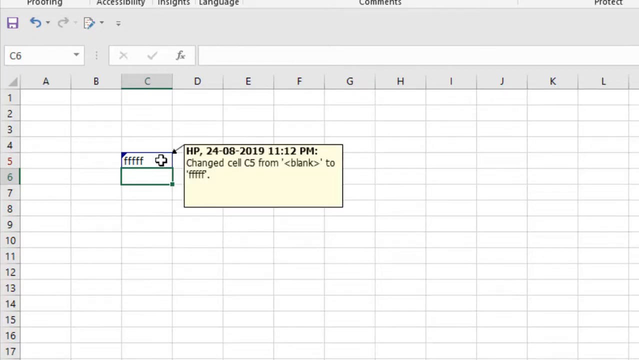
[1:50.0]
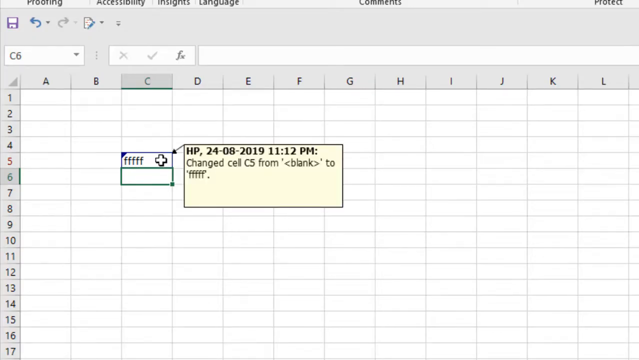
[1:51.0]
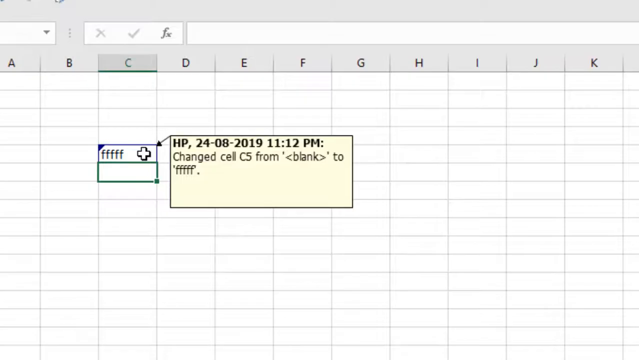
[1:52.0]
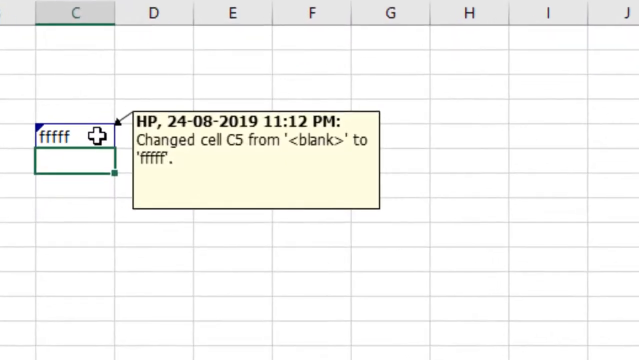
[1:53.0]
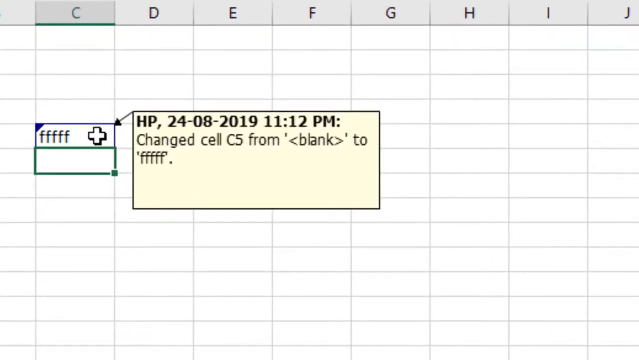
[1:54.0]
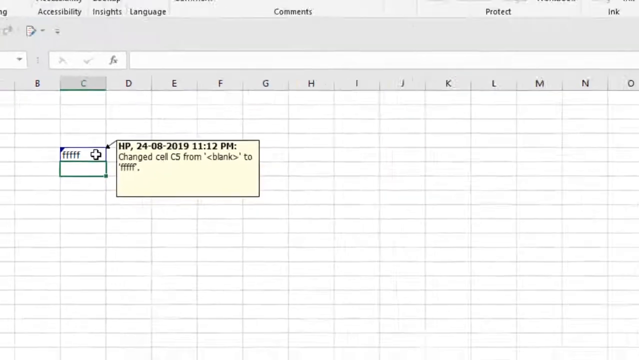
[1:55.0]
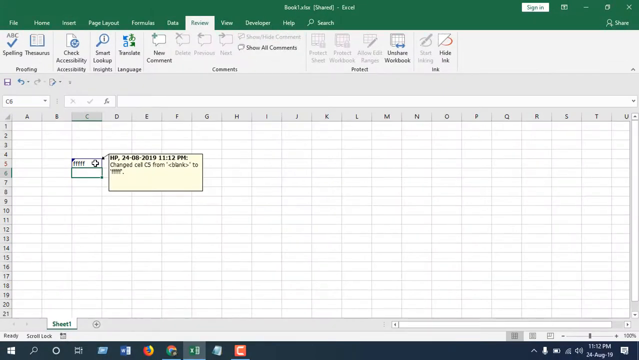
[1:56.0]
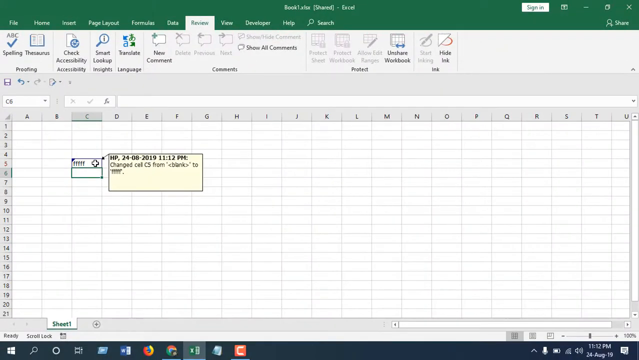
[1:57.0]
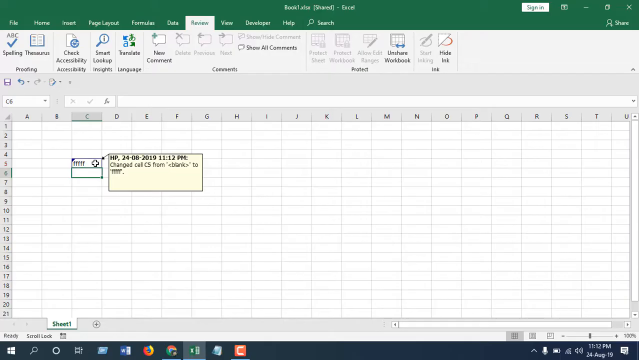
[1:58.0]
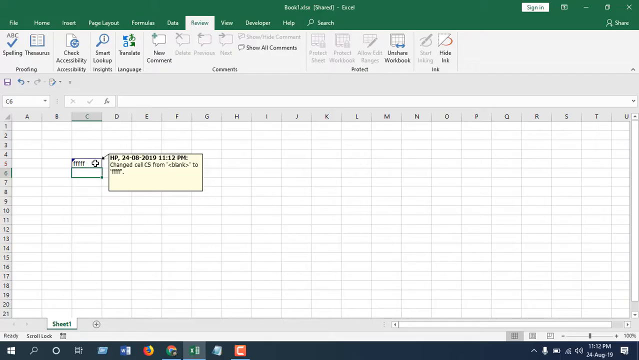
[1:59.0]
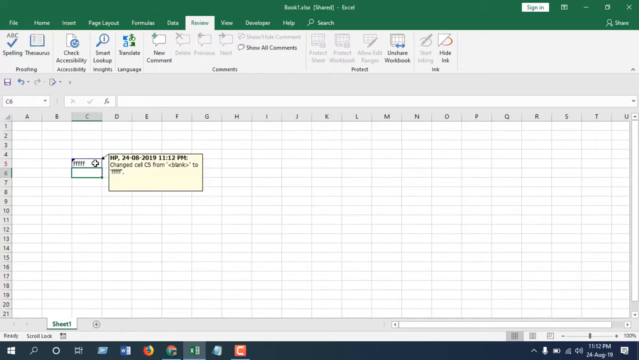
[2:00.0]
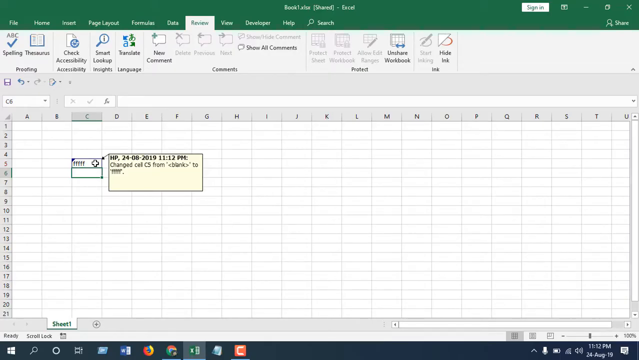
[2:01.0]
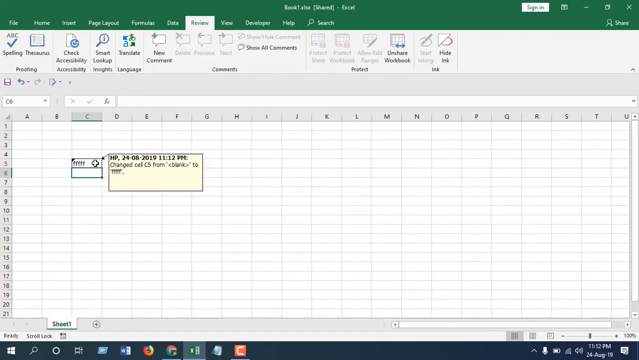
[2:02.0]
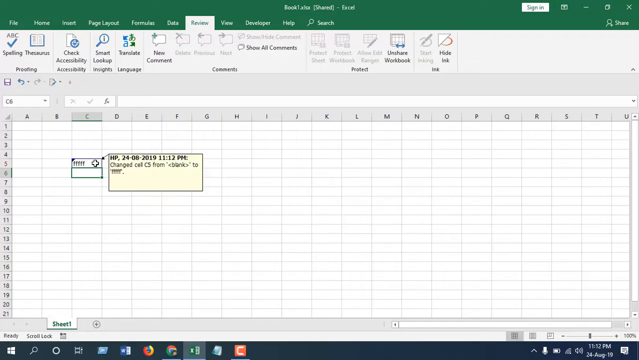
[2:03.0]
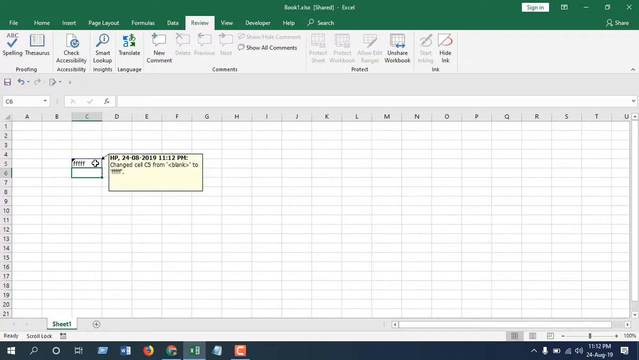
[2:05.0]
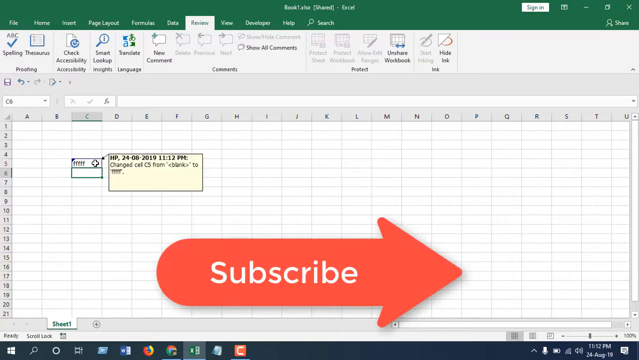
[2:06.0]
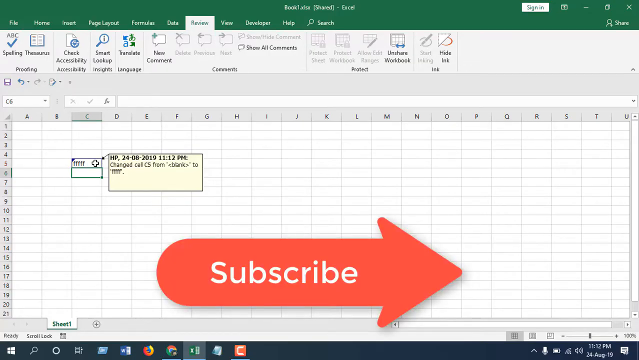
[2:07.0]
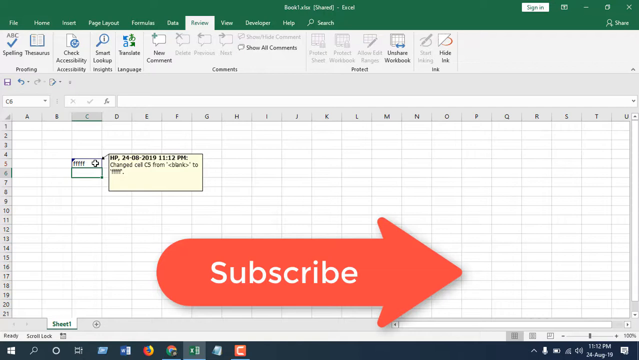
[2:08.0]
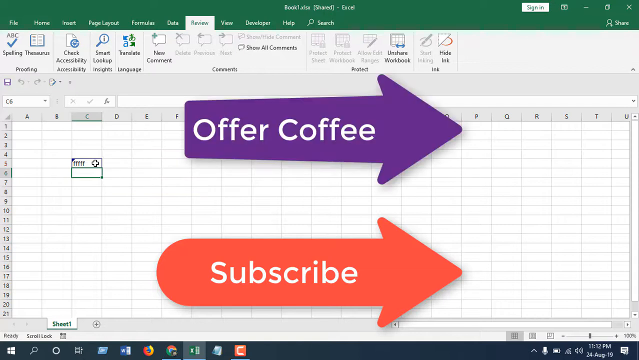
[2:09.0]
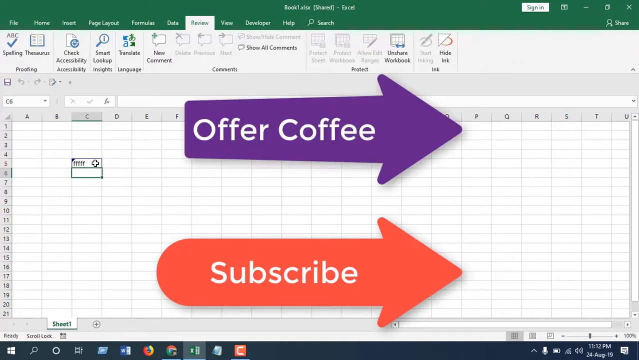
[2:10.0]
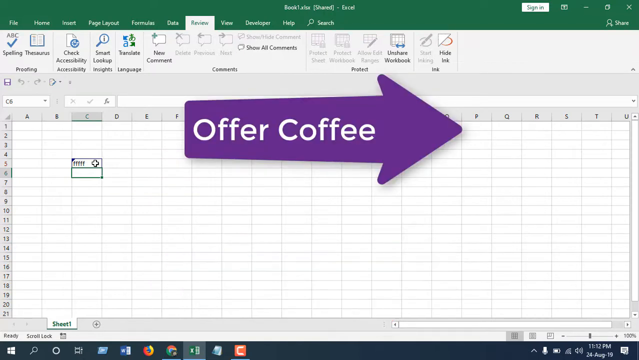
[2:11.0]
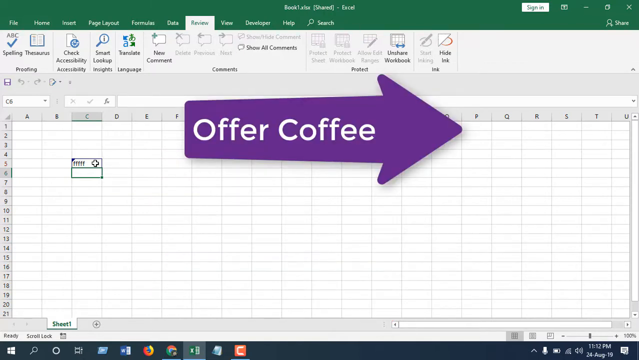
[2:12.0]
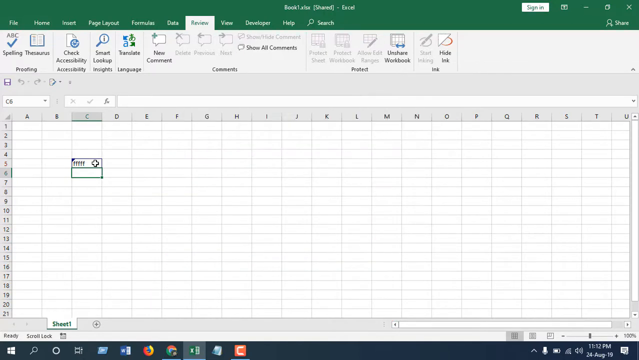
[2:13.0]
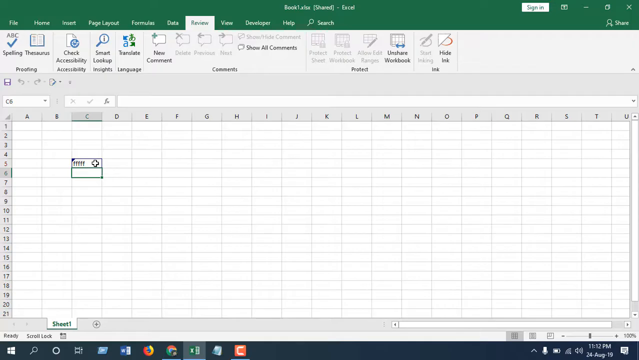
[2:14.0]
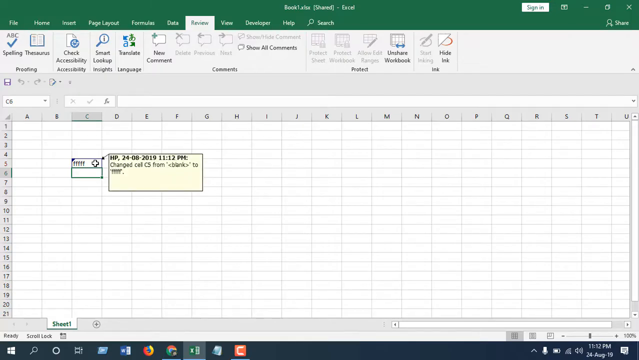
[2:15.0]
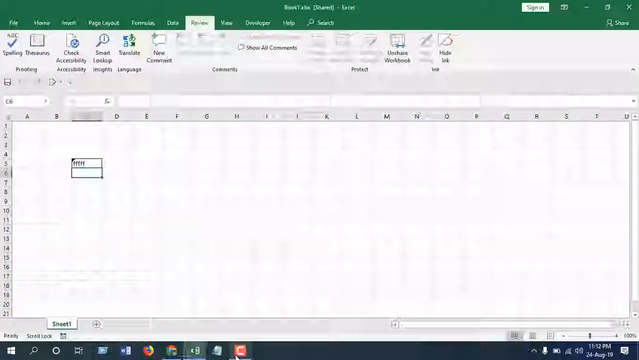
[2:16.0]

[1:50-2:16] A close-up of Microsoft Excel shows many blank cells, with column B, row 5 showing the letters "FFFFF". A small yellow box with black text reads "HP 8/24/2019 11:12 p.m. Changed cell C5 from blank to FFFFF". The view zooms in on that box and then zooms out to the full screen. A very large red arrow pops up with white text reading "subscribe", and another, purple arrow above it has white text reading "offer coffee". The arrows slowly go off the screen, and the mouse moves away from them. Other parts of Excel are visible, including tabs at the top such as Home, Insert, Page Layout, Formulas, Data, View, Developer, Help and Search, and options such as Spelling, Thesaurus, Check Accessibility, Smart Lookup, Translate and Unshare Workbook.